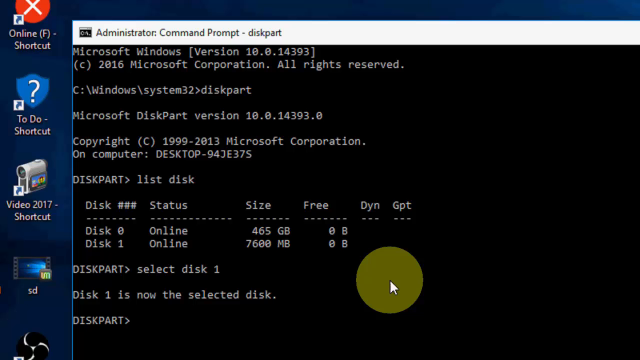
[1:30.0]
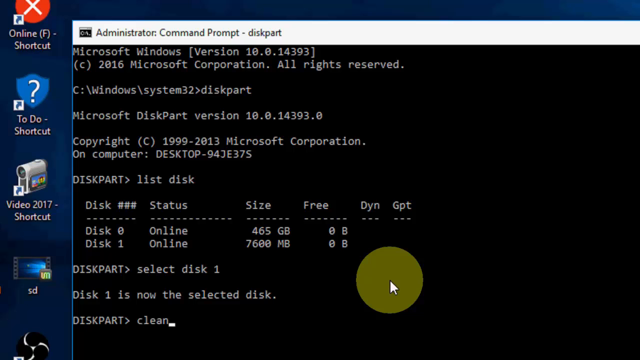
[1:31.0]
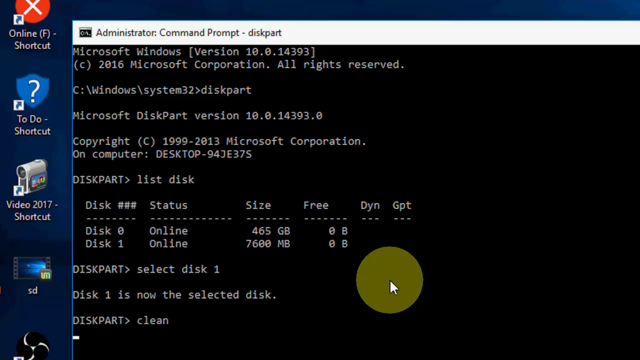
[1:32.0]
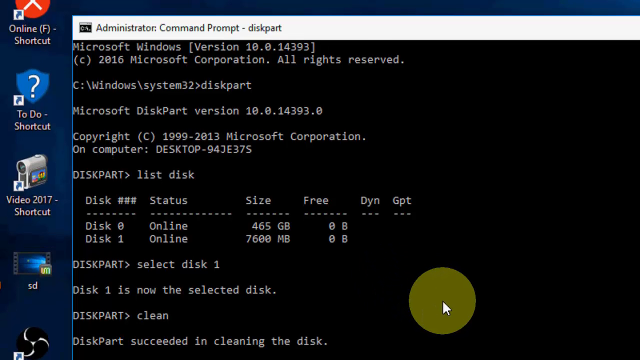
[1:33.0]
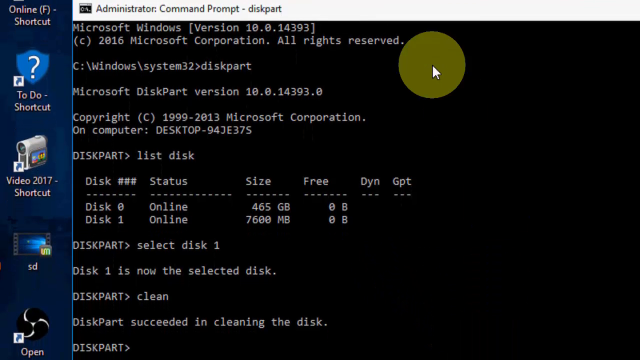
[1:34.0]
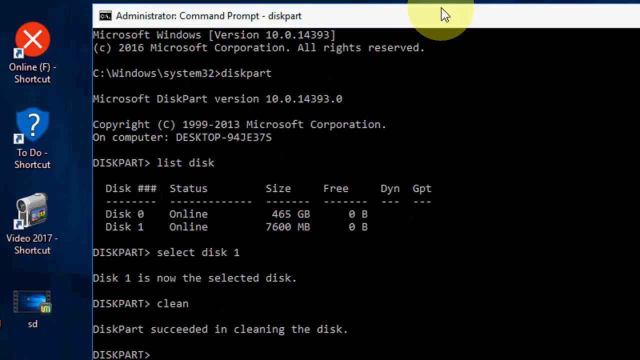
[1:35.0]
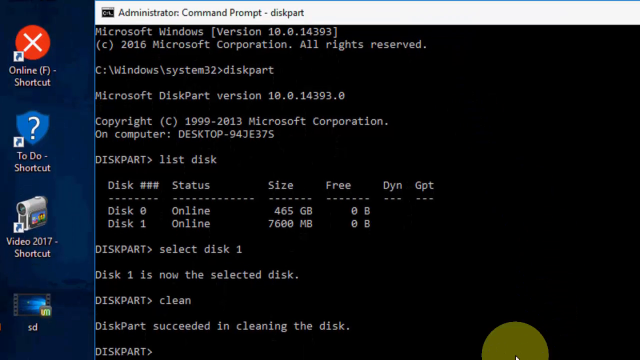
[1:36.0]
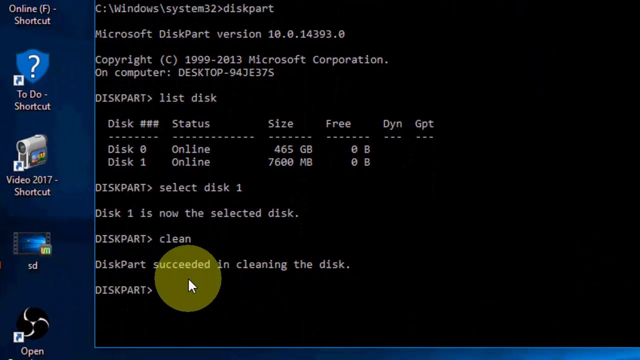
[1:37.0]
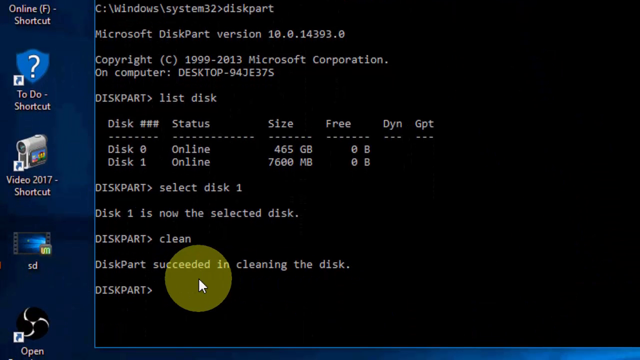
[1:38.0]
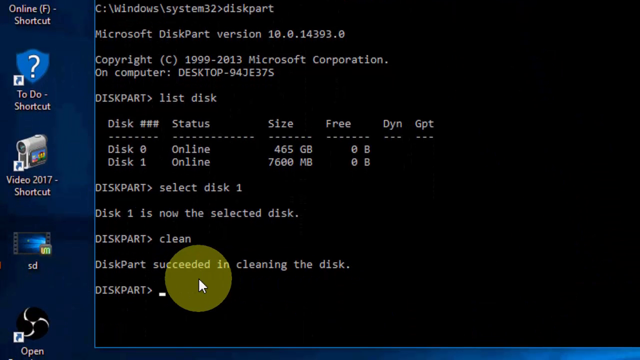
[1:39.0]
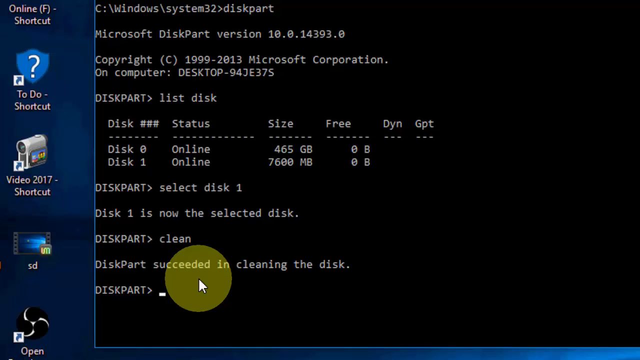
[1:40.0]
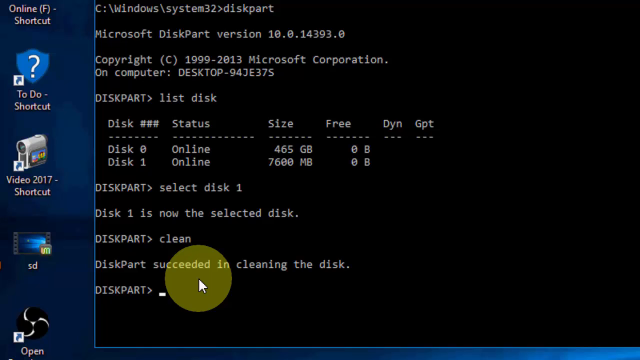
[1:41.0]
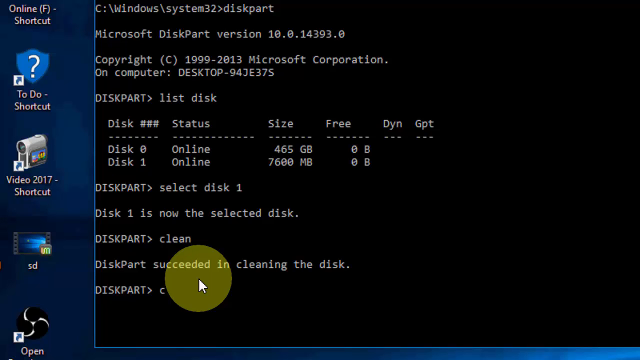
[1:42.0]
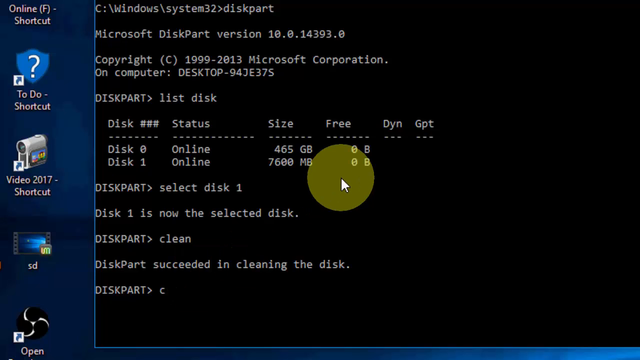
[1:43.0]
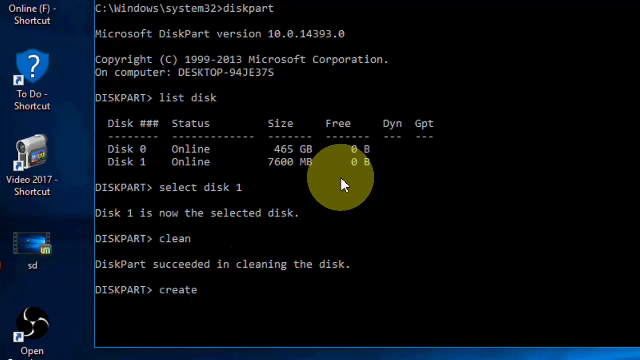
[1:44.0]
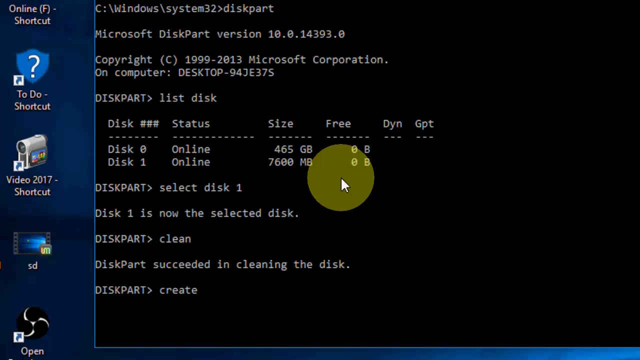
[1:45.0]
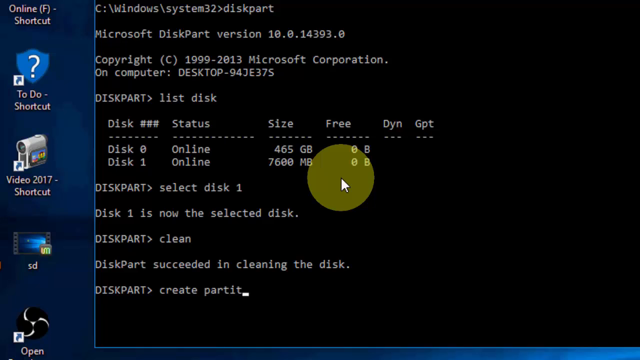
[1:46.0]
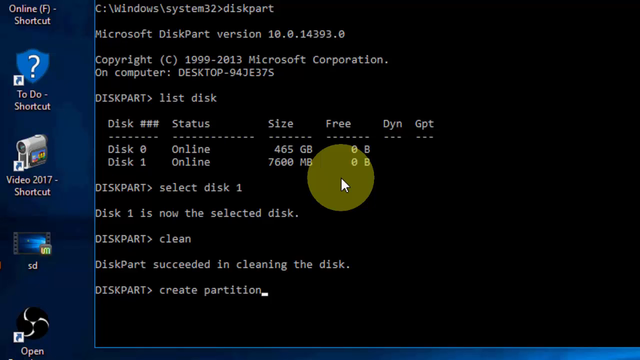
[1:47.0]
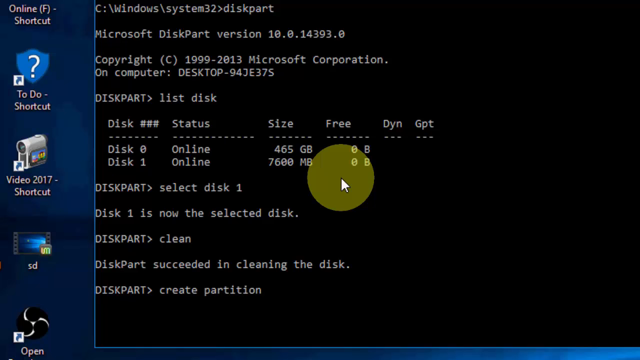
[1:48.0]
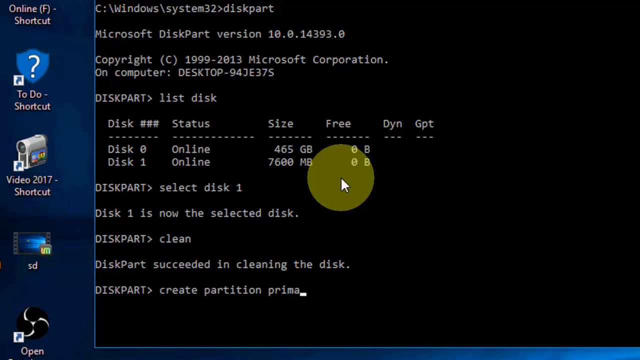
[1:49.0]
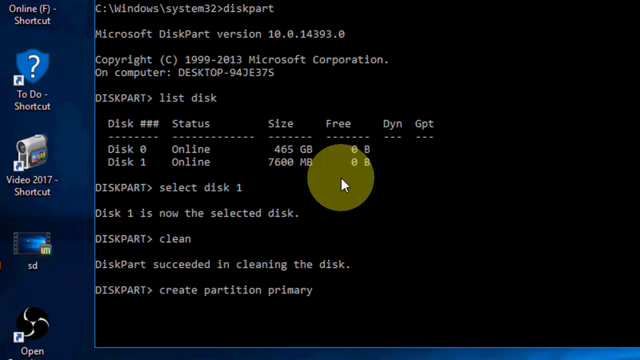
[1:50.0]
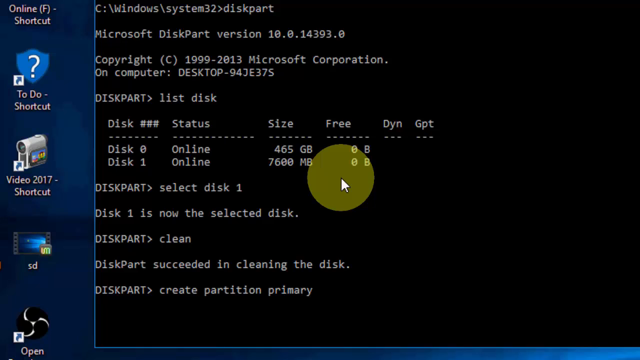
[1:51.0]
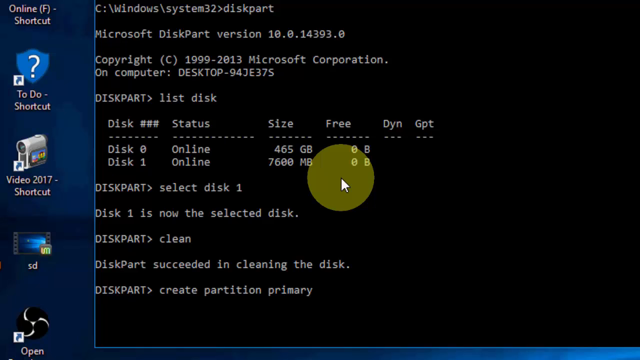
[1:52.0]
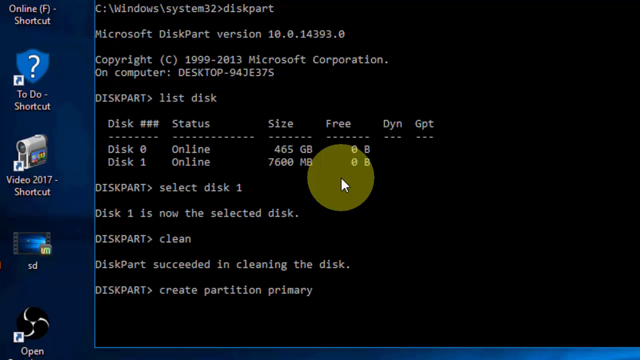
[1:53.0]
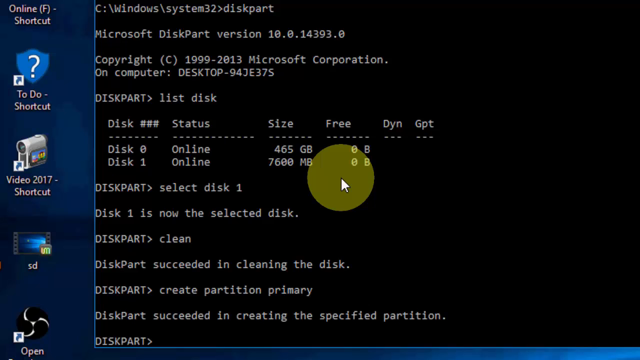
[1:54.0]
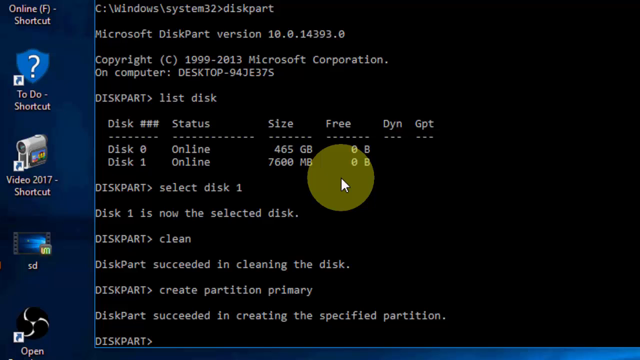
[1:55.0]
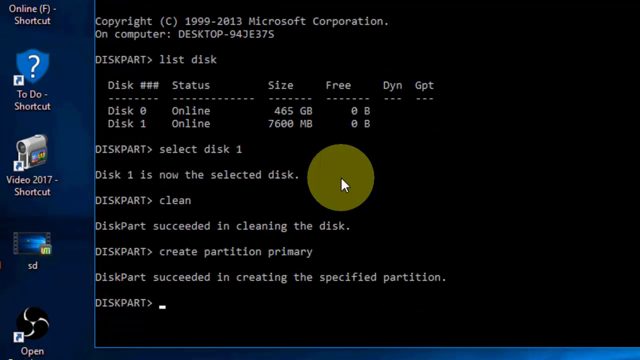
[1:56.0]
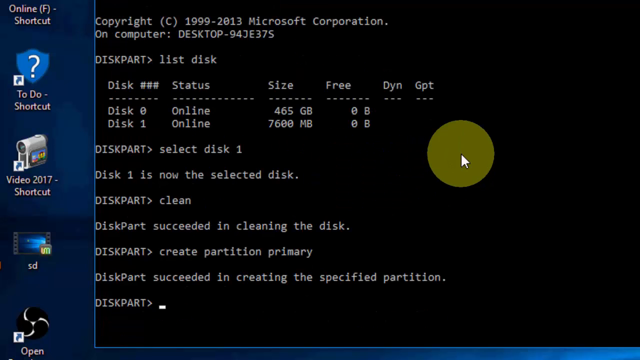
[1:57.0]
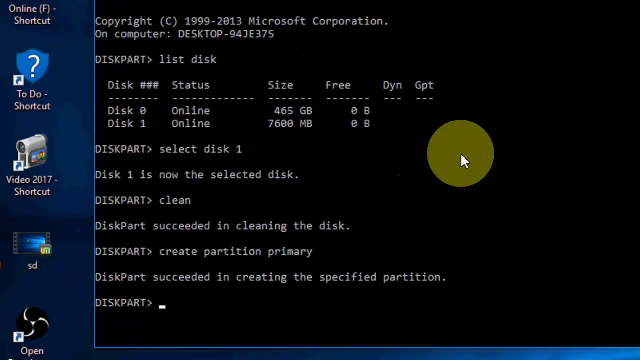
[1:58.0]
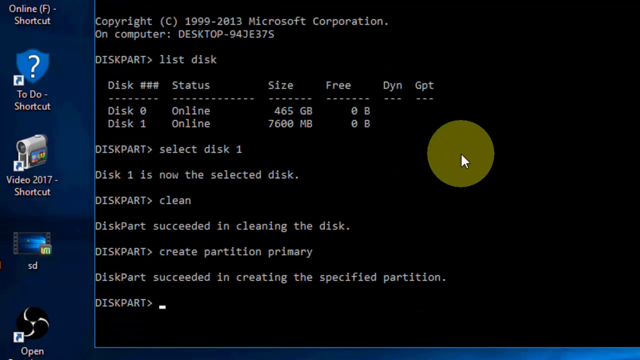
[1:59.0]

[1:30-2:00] The administrator command prompt is still open as the person works in DiskPart to change the disk. The prompt shows "2016 Microsoft Corporation", DiskPart version 10.0.14393.0, 1999 to 2013 Microsoft Corporation, on computer desktop 94je37s. Below is the chart of disk number, status, size and free: Disk 0 and Disk 1 are both online, at 465 gigabytes and 7600 megabytes, each with 0 bytes free. Disk 1 has been selected, and it reads "Disk 1 is now the selected disk". The person enters "clean", and DiskPart states that it succeeded in cleaning the disk. On the desktop there are four applications, including an online app shortcut, a to-do shortcut and a Video 2017 shortcut, with a saved video called SD below them. The person moves the command prompt higher so the commands being entered are visible.